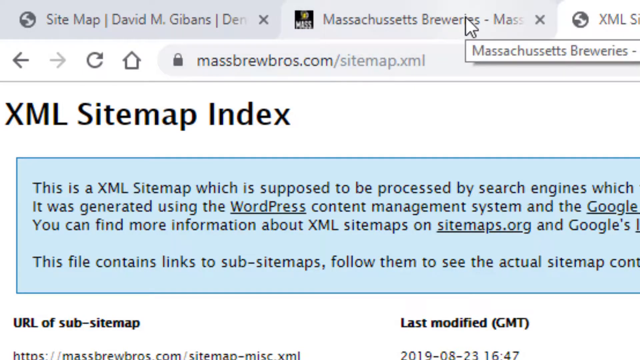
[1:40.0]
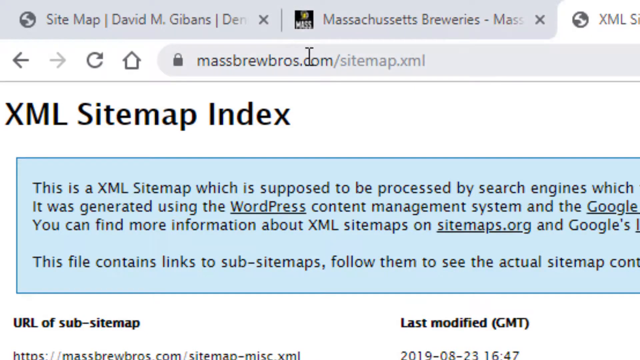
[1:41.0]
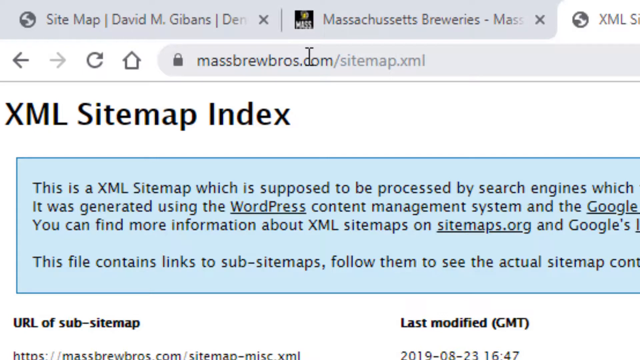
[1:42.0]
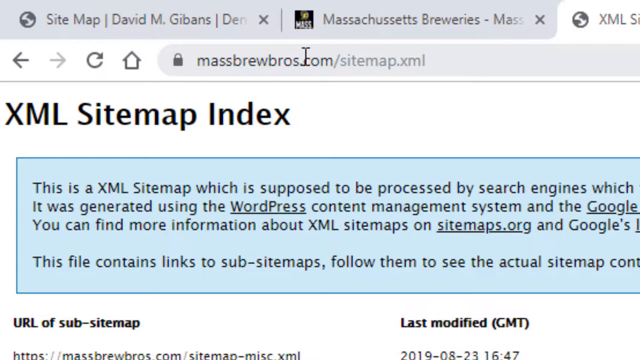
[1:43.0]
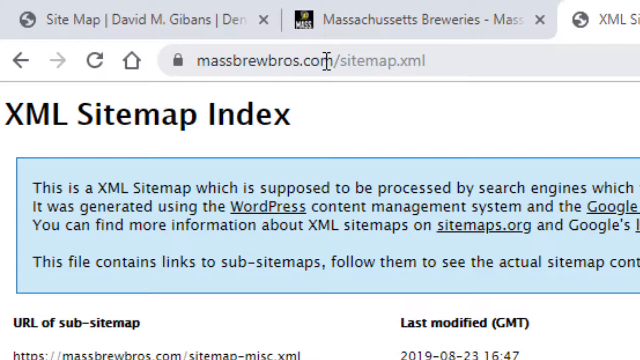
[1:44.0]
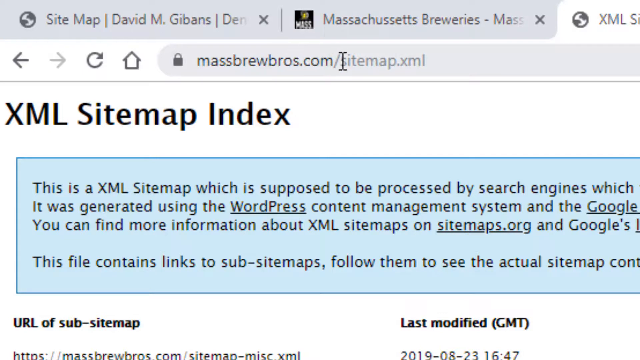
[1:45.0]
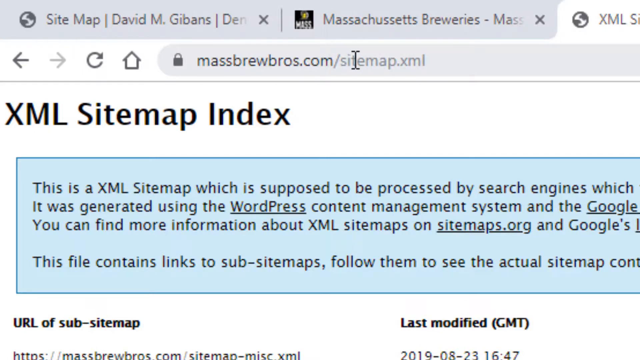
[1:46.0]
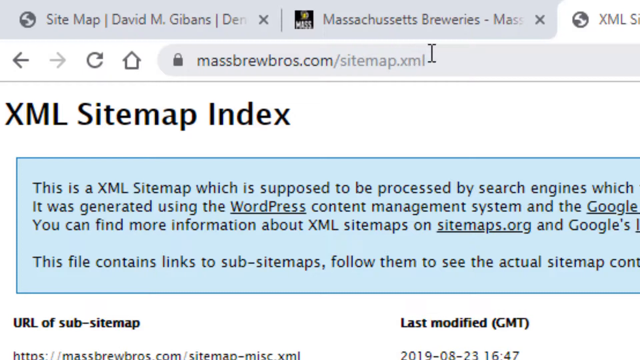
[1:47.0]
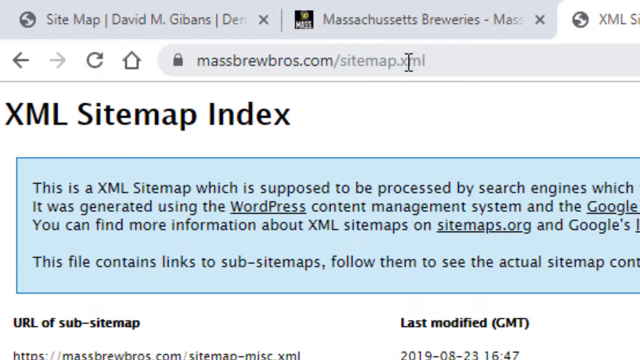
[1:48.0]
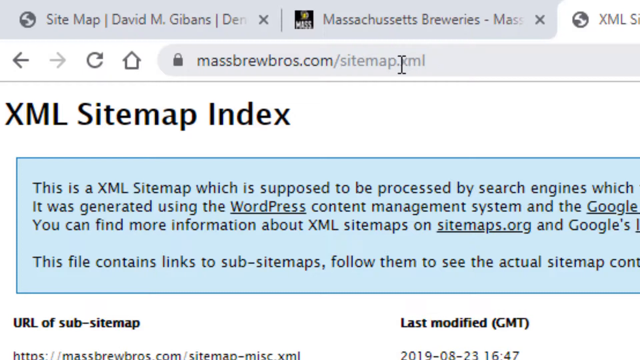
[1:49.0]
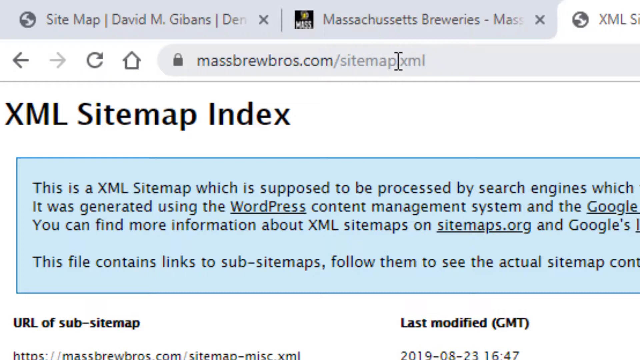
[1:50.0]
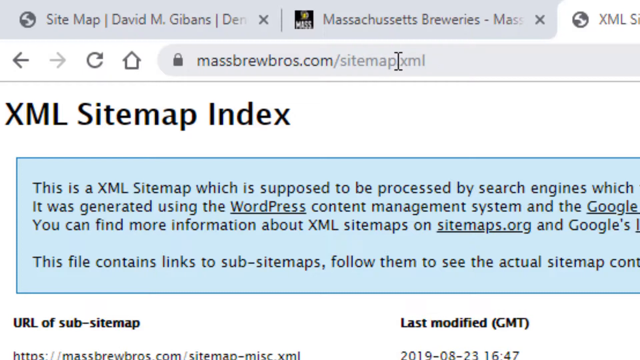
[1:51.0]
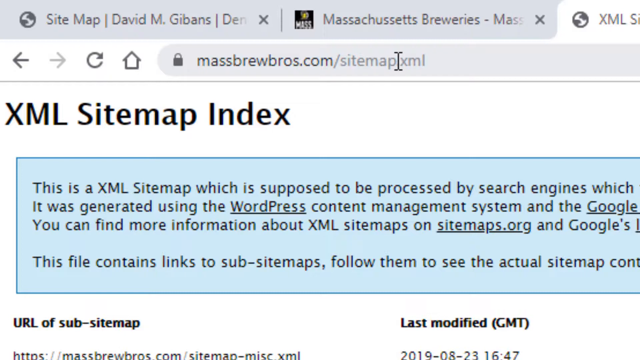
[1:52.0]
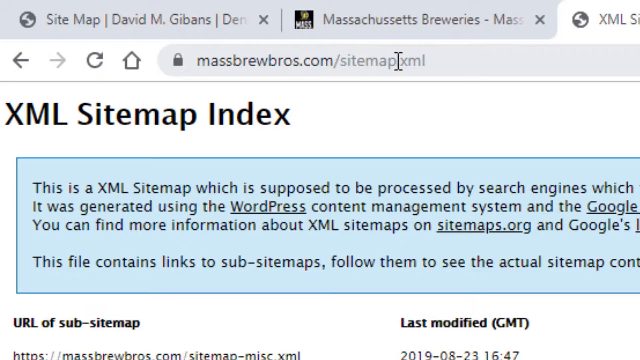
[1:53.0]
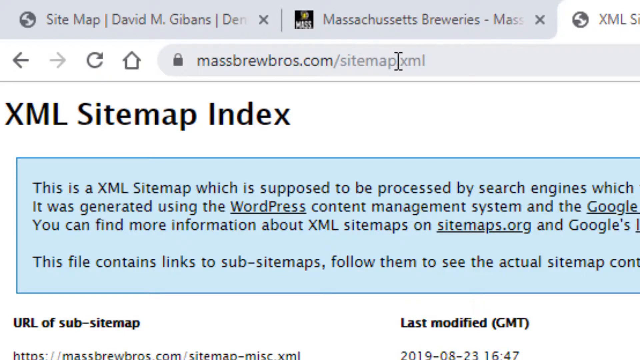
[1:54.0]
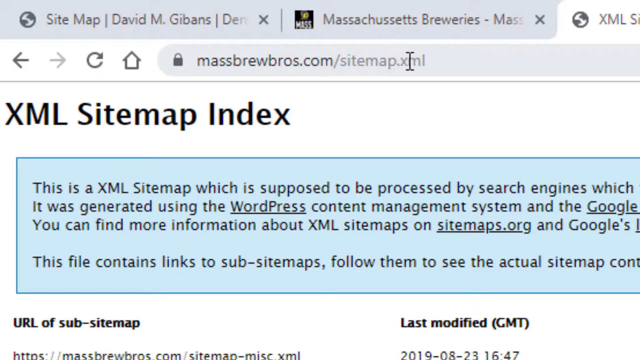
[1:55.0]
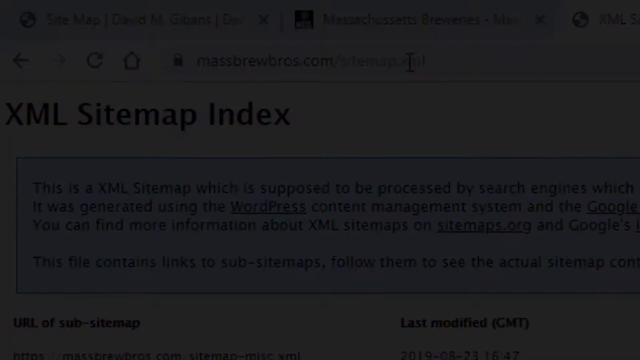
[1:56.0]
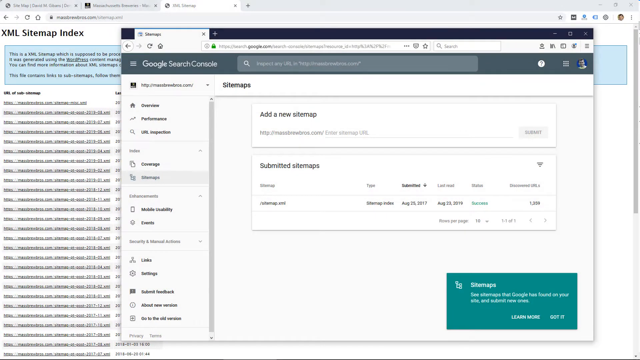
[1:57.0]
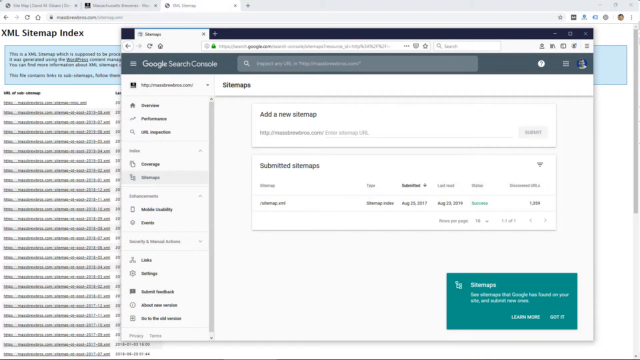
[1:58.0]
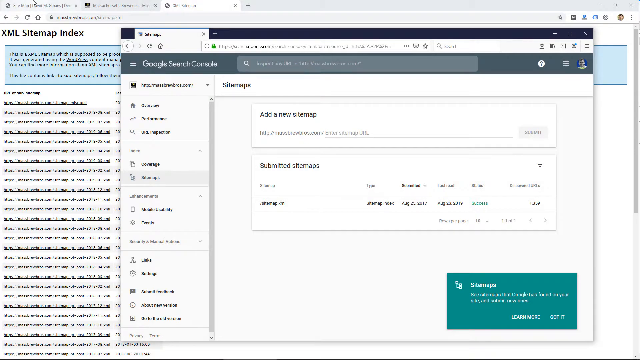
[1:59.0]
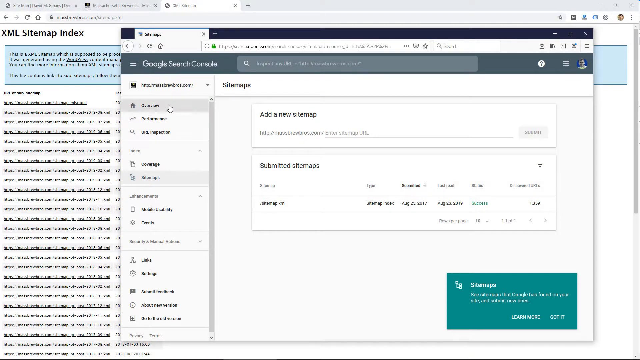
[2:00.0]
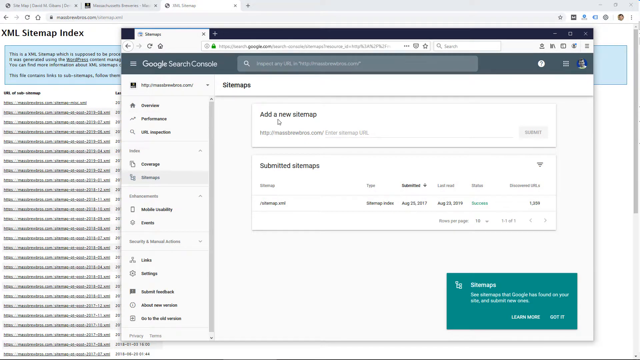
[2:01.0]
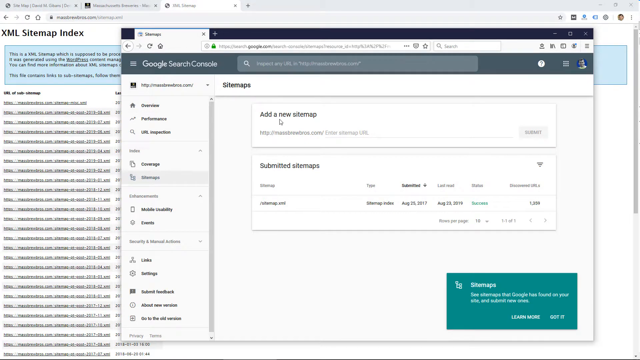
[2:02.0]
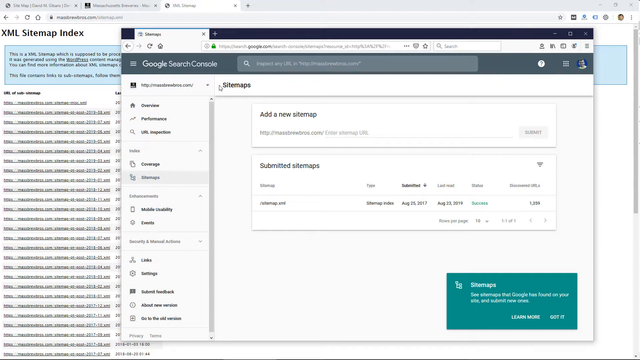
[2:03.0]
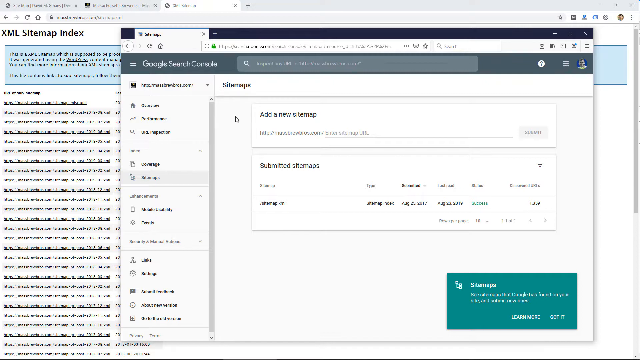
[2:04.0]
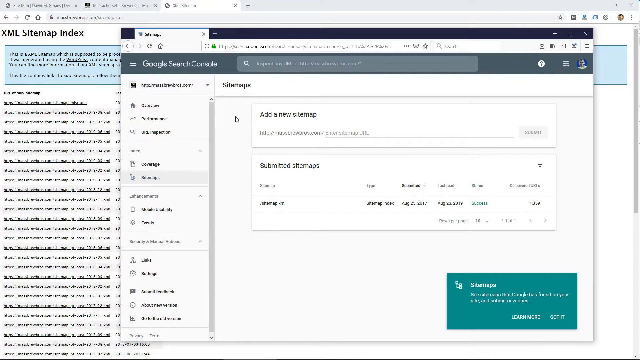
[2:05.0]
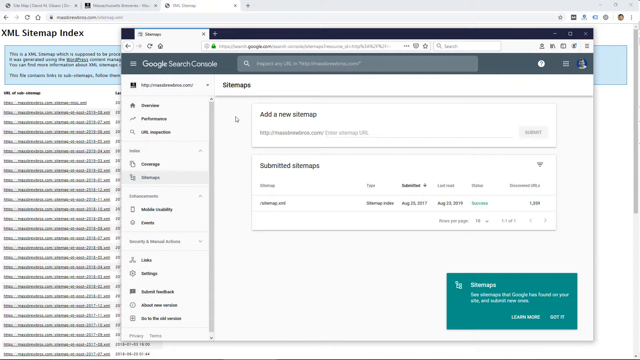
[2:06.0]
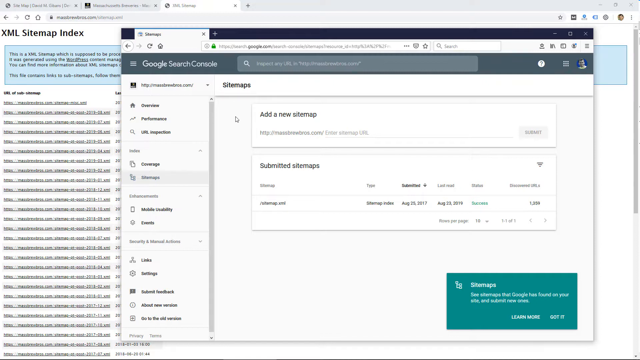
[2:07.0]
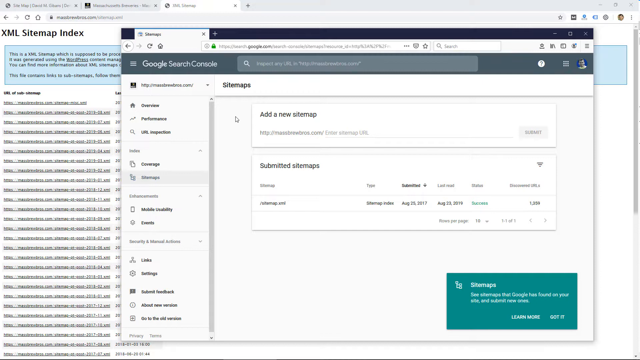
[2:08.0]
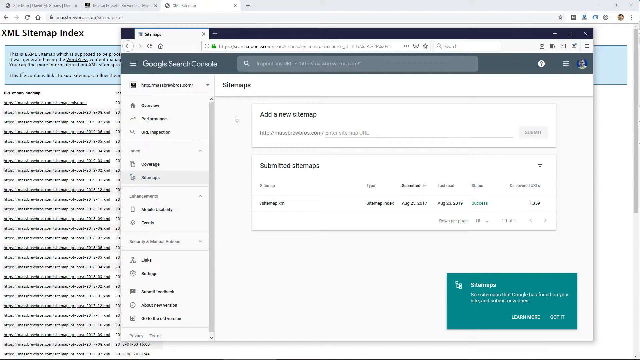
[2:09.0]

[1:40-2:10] A web page shows back, forward, refresh and download buttons at the top left, with "massbrewsbros.com sitemap.xml" to their right. The pointer is above the search bar, on text reading "Massachusetts Brewers." Below the back and forward buttons is "XML site map index," followed by a blue banner with writing on it. The pointer moves to the search bar and hovers over the sitemap part of the address, moving right and back left across it, then stays there. A different screen appears with a couple of pages open, one of them smaller as if minimized. It has a lot of writing on it and a turquoise triangle at the bottom right. The pointer goes under "add a new sitemap," then to the left of it, and stays there.